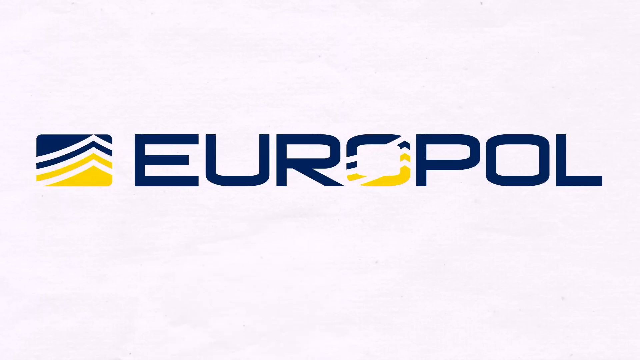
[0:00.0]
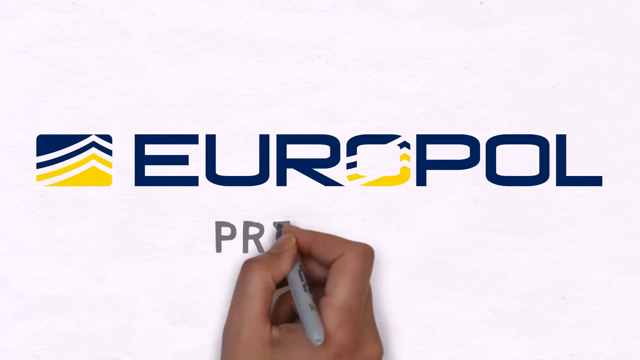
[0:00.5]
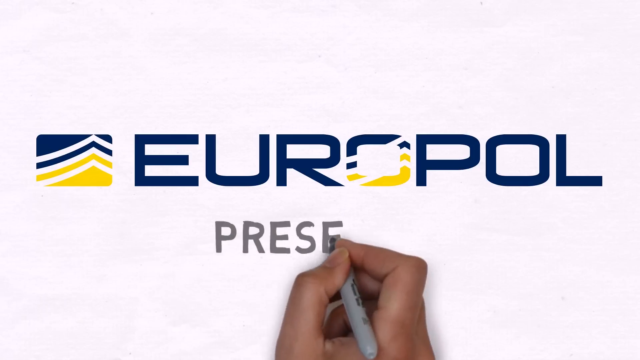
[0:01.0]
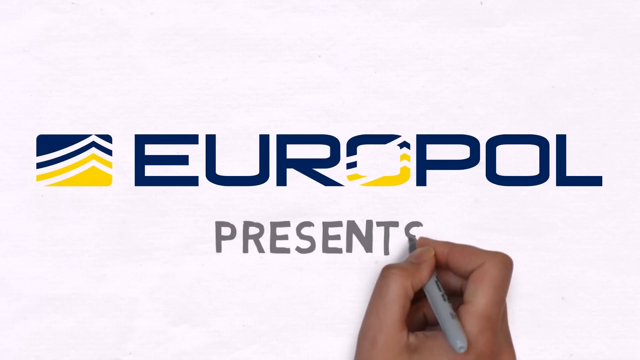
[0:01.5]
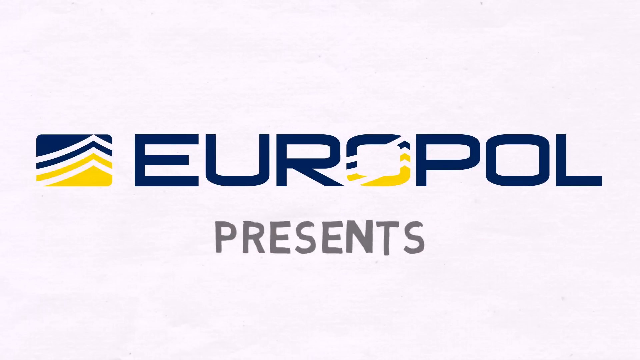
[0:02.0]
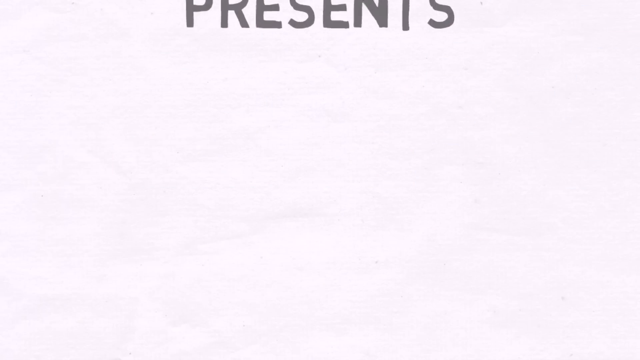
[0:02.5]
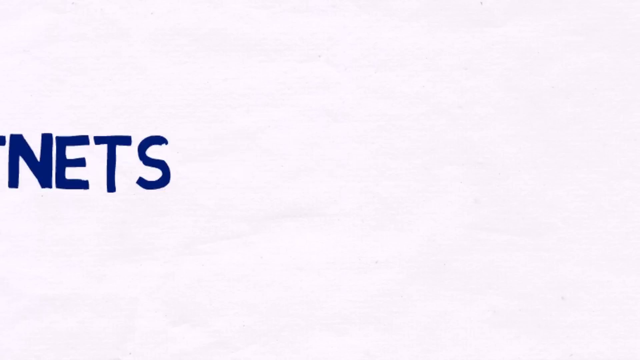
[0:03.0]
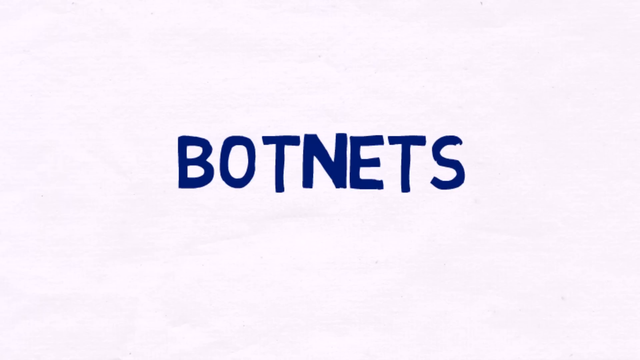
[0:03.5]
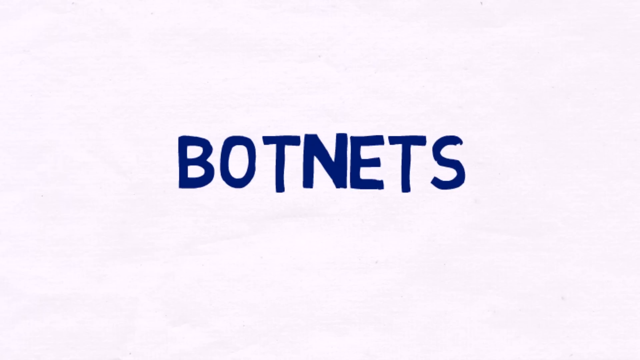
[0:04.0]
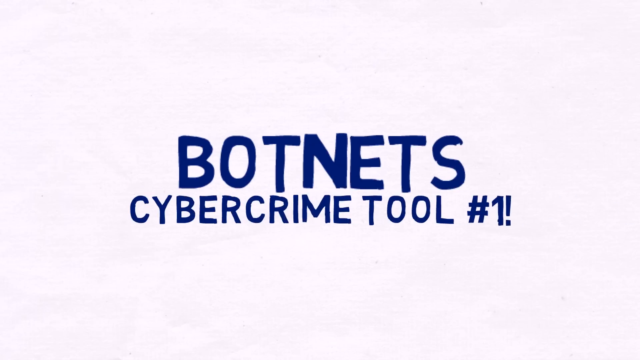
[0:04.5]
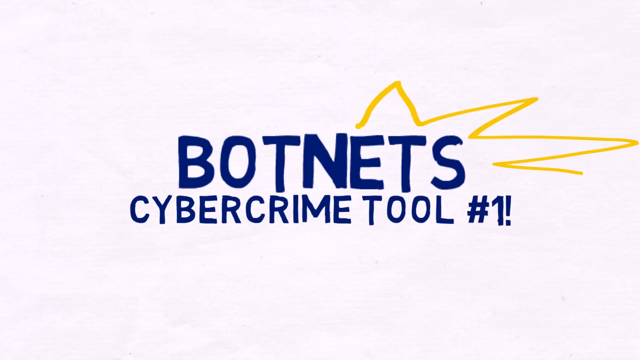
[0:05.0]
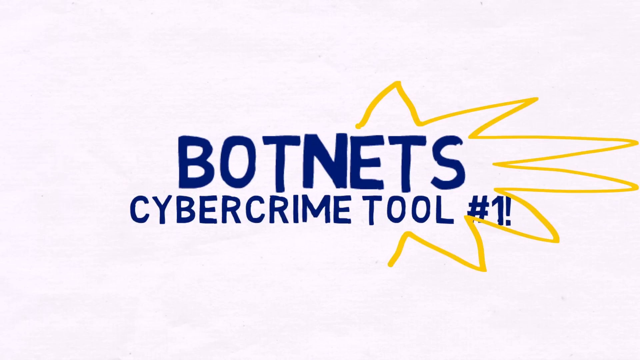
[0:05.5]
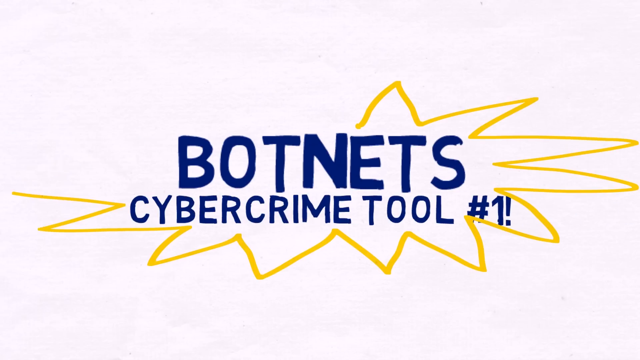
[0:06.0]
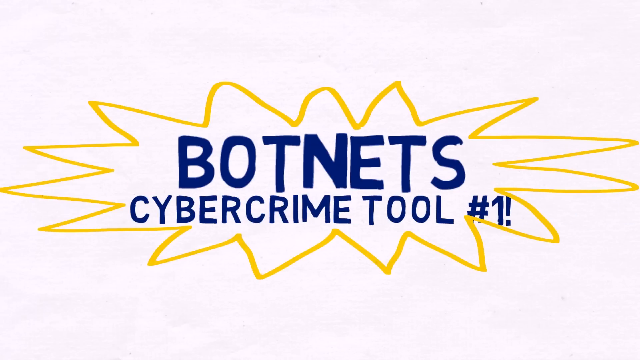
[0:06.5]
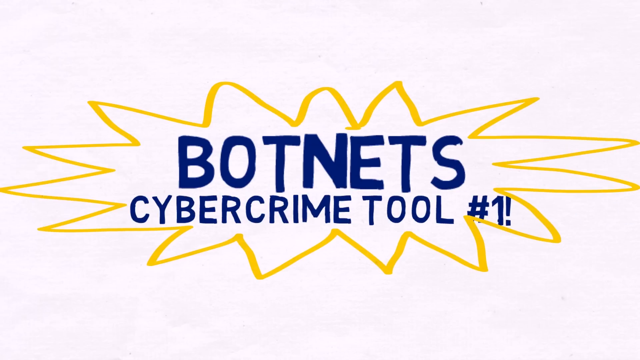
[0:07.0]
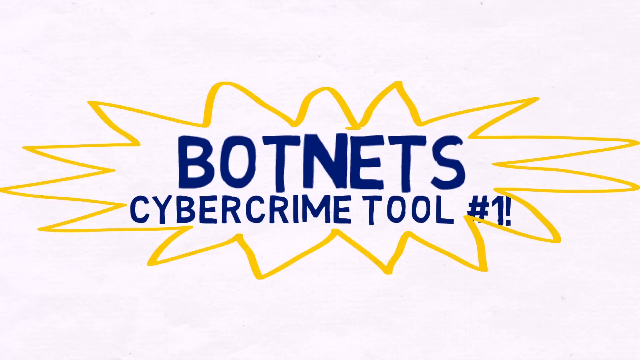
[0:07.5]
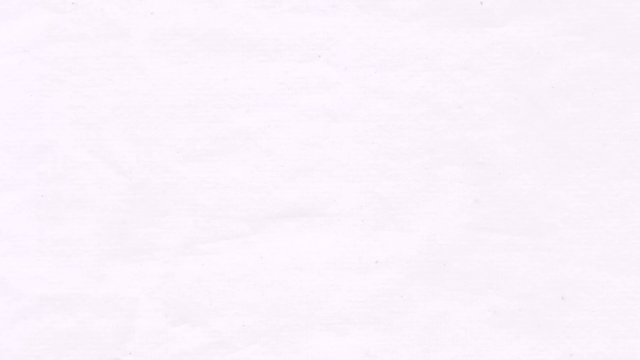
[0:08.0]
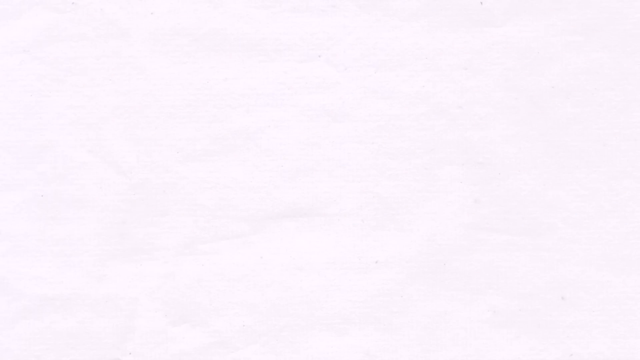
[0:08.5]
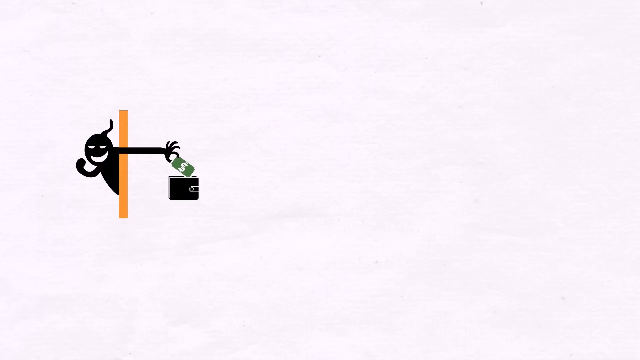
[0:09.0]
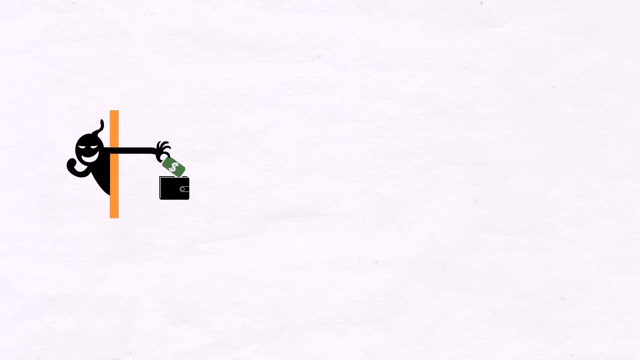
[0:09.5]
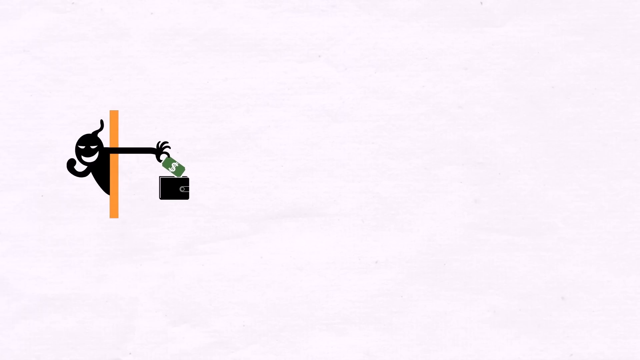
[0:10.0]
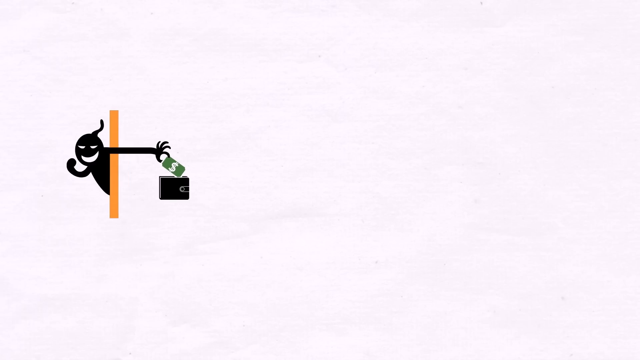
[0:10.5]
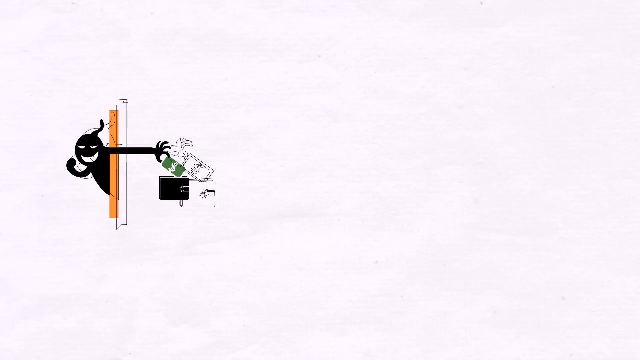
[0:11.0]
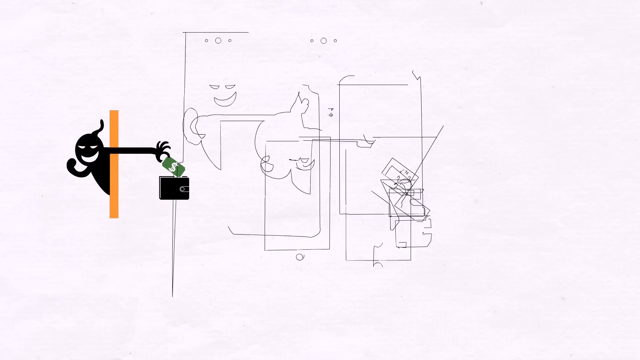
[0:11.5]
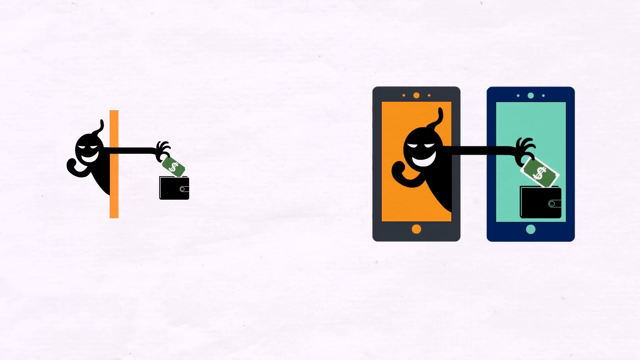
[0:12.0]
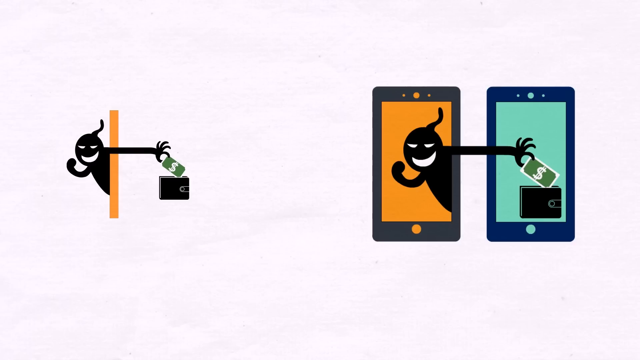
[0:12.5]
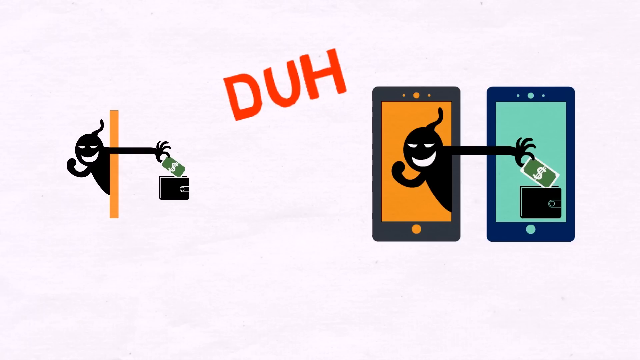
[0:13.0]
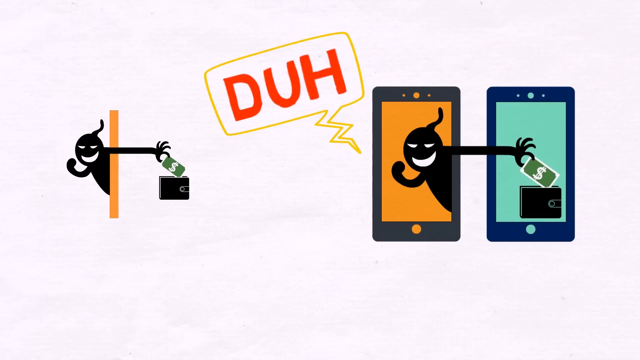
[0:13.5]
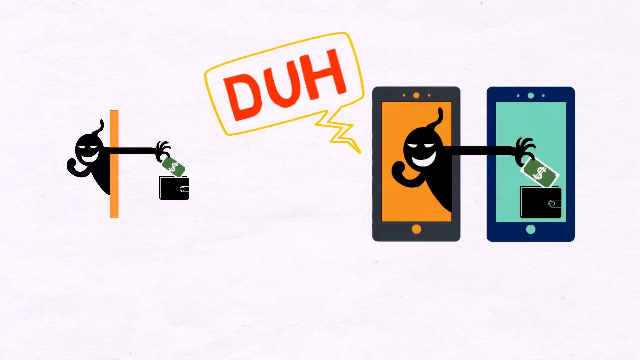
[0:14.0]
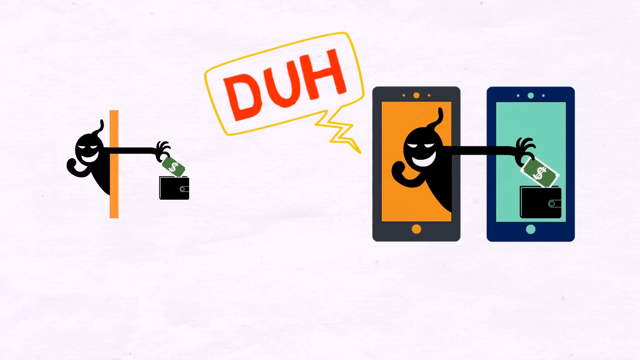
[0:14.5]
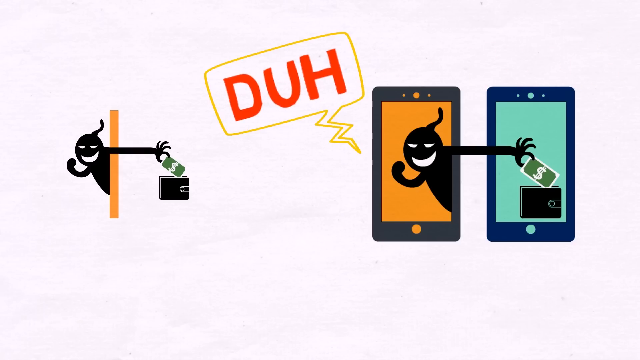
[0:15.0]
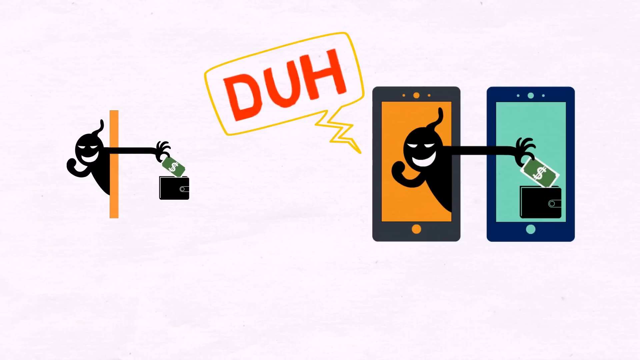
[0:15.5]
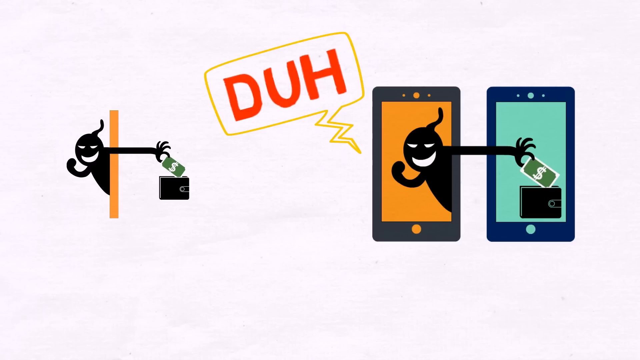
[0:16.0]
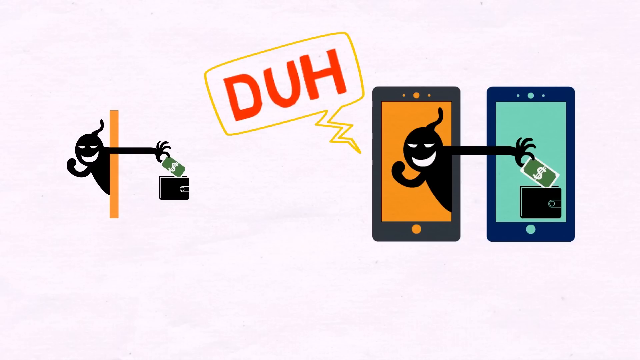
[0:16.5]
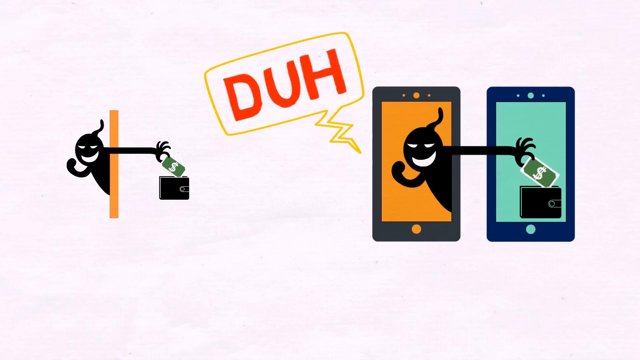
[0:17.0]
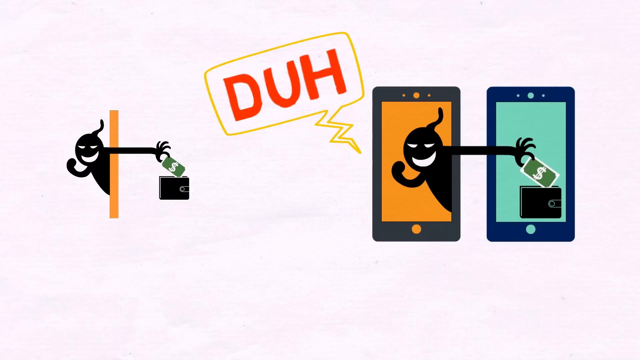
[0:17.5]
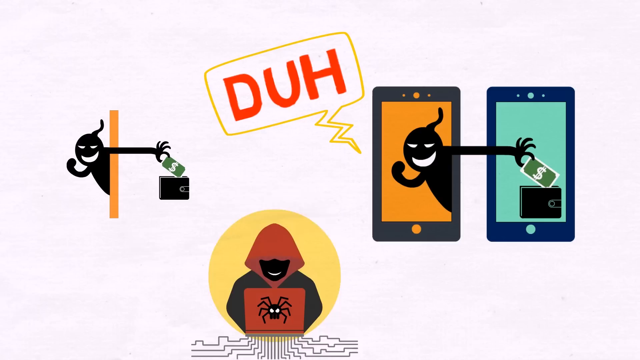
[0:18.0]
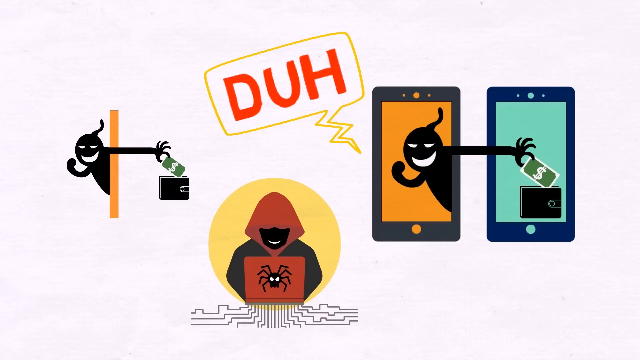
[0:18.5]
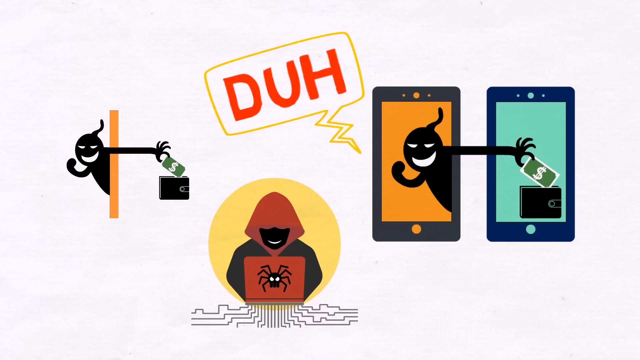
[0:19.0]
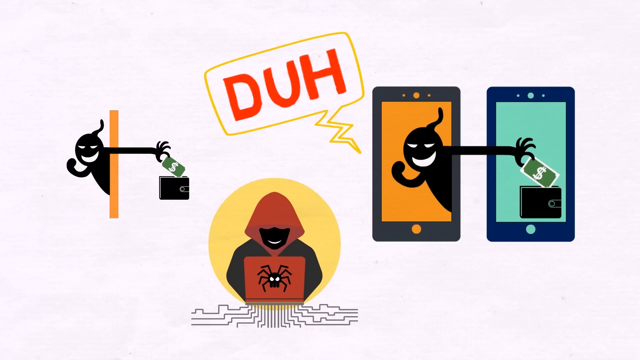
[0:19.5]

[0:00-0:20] The video opens on a white background with a blue, white and yellow logo across the middle centre, running from left to right. It has kind of a yellow mountain at the bottom, with the slope running from just inside left of centre, and above that a yellow line with a point. This is separated by a white line, then another white line, then a blue line that goes to a point and out the right side, then another white line, then a blue triangle from the left side to just over mid top, and a small triangle in the right-hand corner. Next to it is the text "Europol". A right hand holding a pen appears from the bottom of the screen and writes "Presents" in grey. That text disappears and is replaced by "Botnets" in a blue, kind of irregular font. Yellow pointy lines run from the top of the E up and down, off to the right, back towards the top of the S, off to the right, back towards the middle of the S, then down and off towards the right of the screen, turning back in a little underneath. Under "Botnets" is the text "Cybercrime Tool #1!". The pointy, wavy yellow line continues around the rest of the text and meets in the middle at the top with a slightly irregular join, leaving a horizontal bit of yellow sticking out just above where the N almost meets the E in "Botnets". The graphic then moves more and the text disappears.